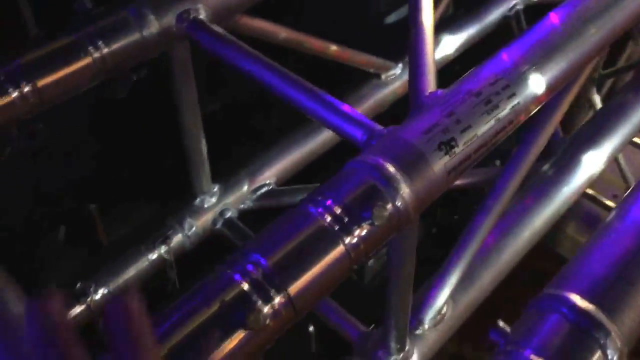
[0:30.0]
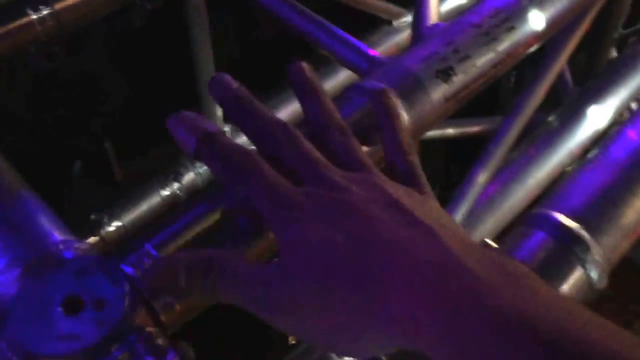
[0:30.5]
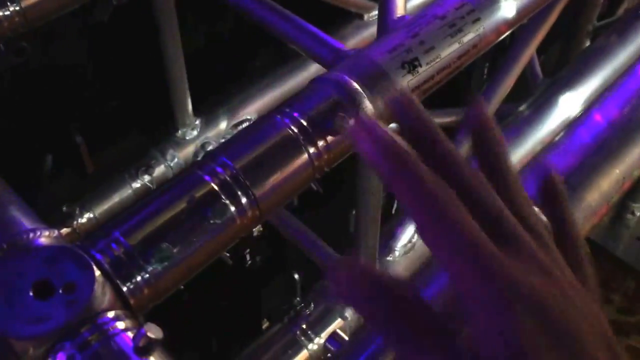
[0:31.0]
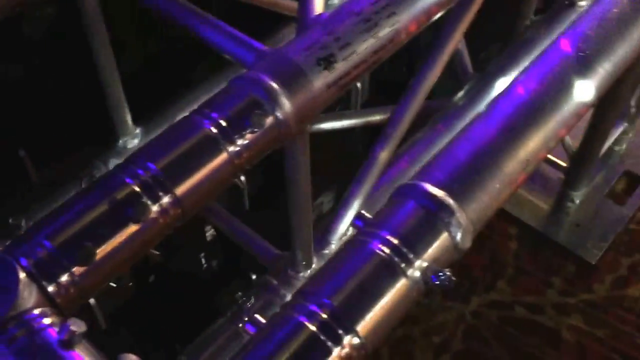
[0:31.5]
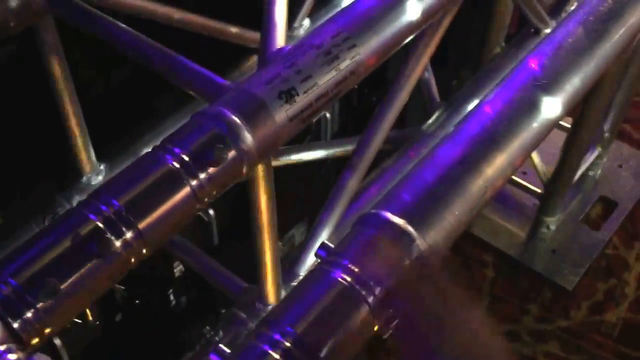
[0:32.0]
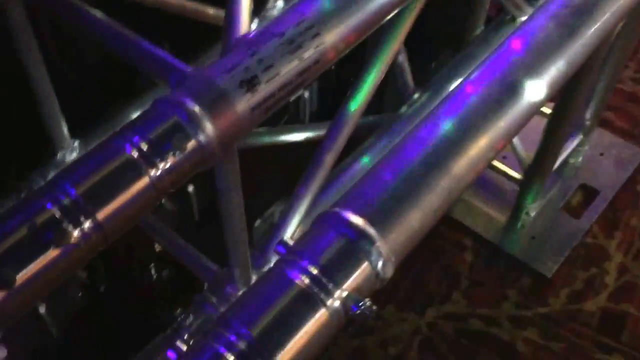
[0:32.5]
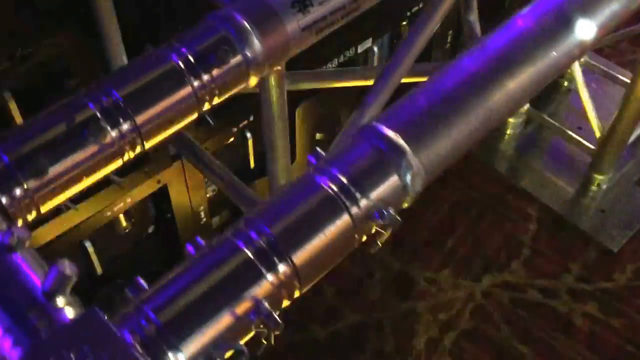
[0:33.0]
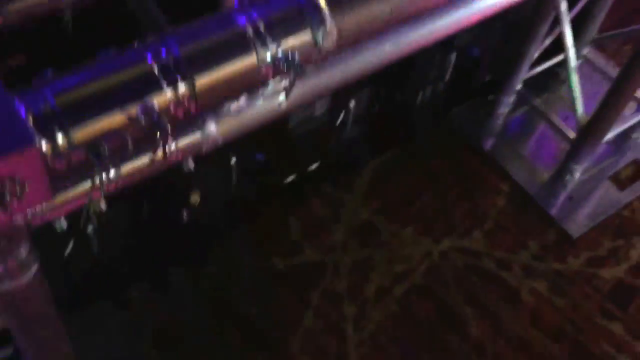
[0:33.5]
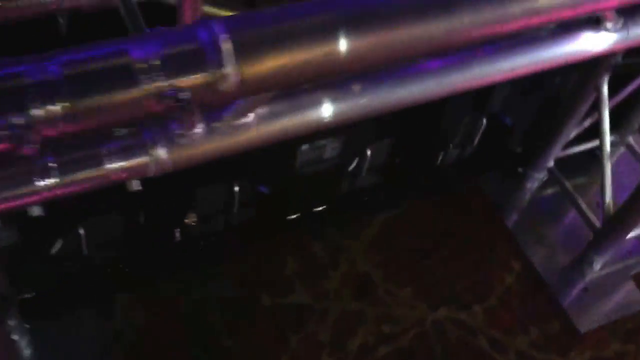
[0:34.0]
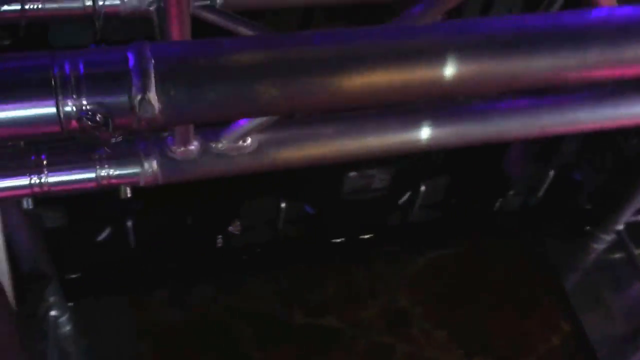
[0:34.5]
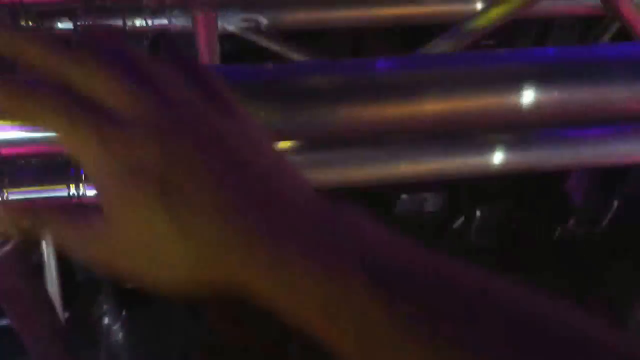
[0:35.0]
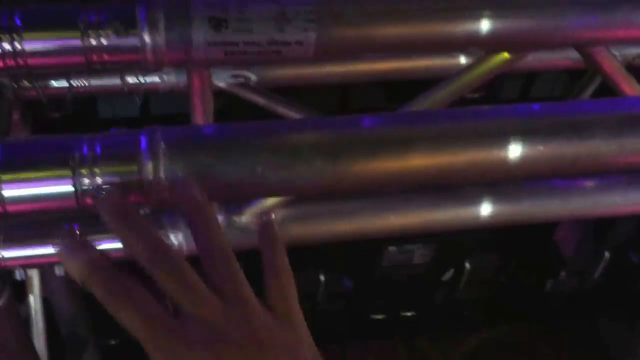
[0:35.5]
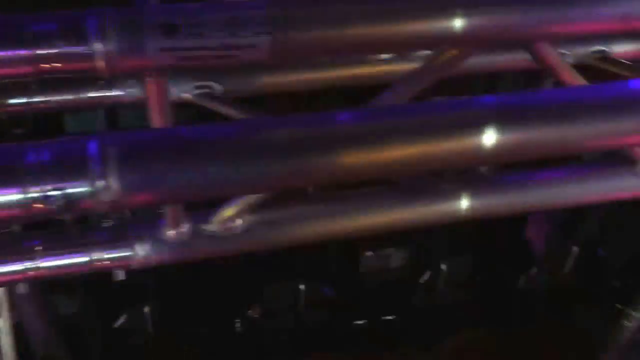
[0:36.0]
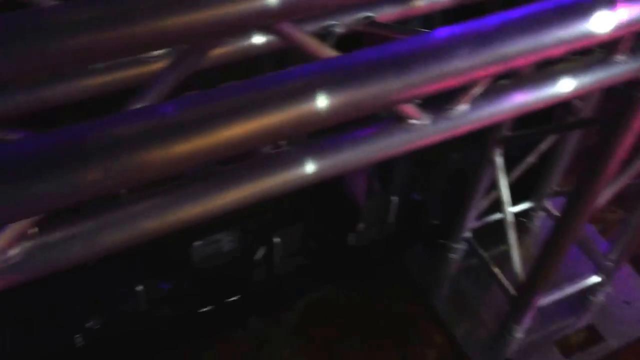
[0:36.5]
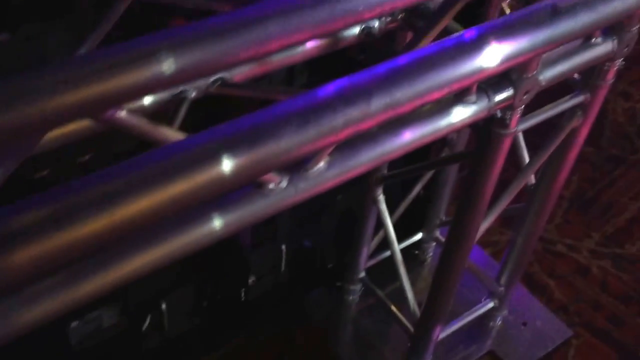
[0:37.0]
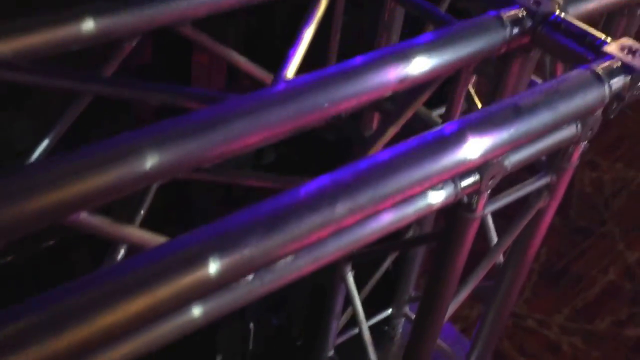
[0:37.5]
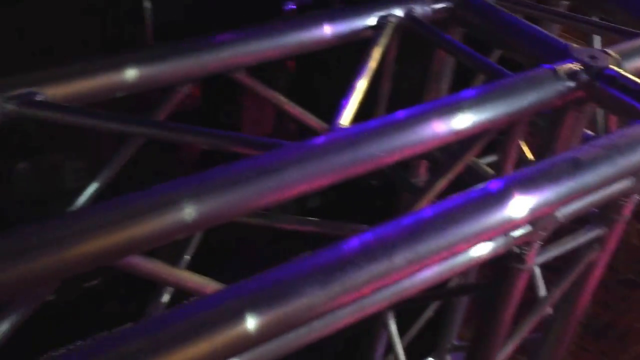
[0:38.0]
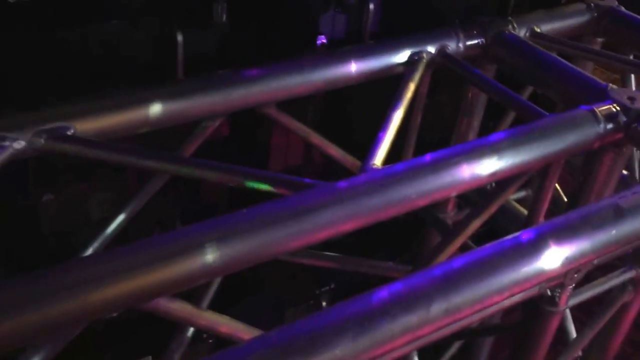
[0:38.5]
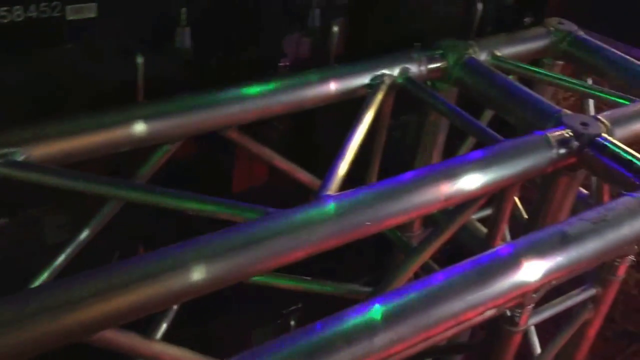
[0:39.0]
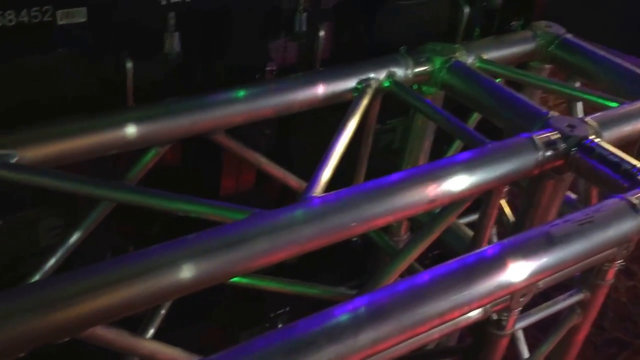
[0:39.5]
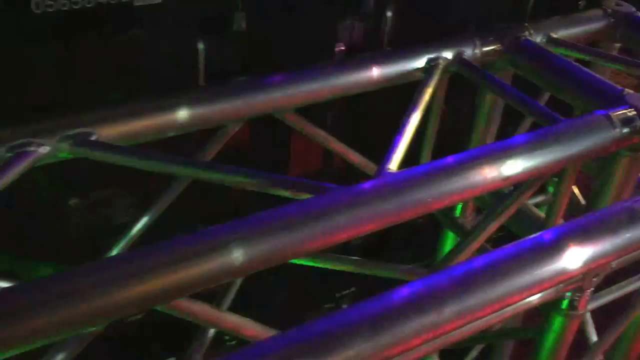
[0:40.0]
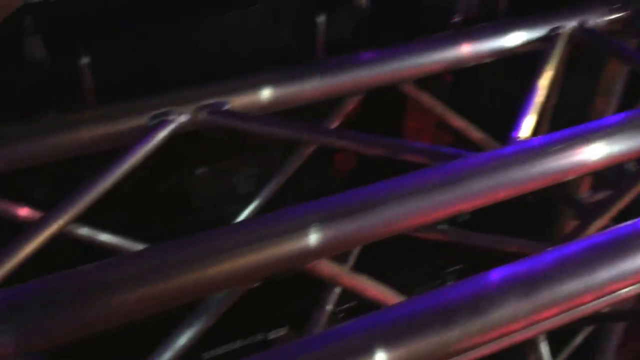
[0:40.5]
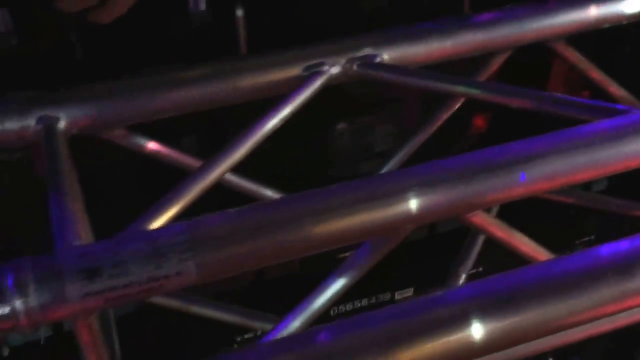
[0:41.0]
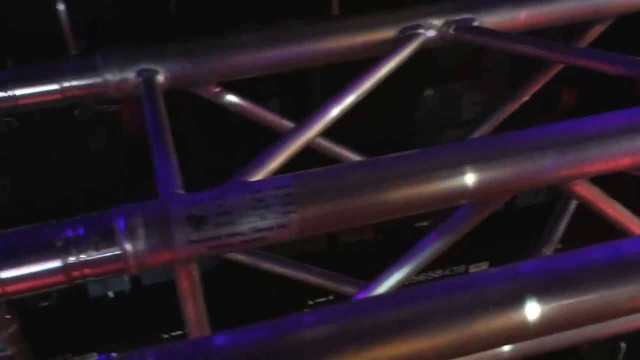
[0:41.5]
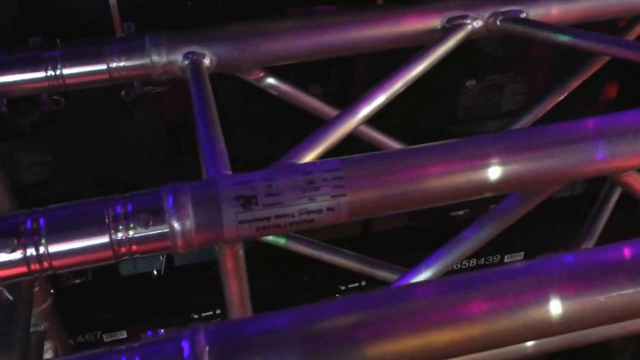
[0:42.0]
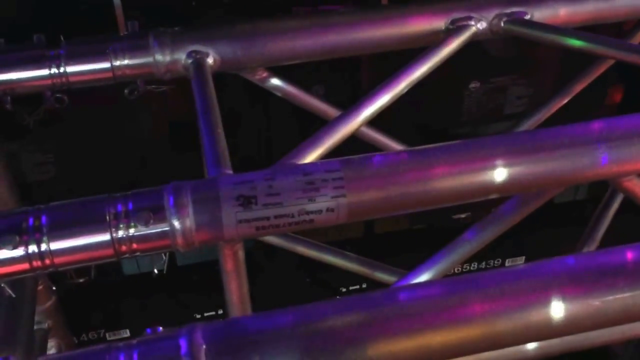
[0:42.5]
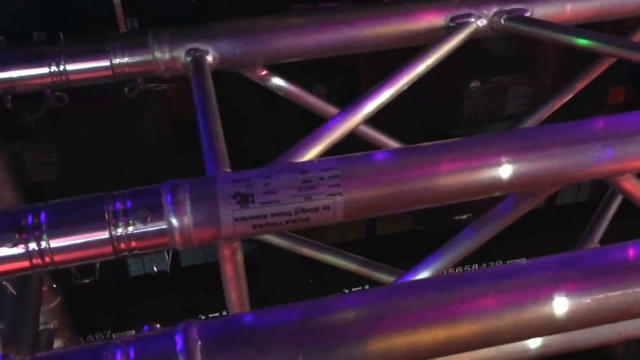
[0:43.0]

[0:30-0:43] The shot starts as a close-up of some sort of metal frame, with green and purple strobe lights flashing on it. The individuals are not seen; only a hand appears, seemingly pointing out various parts of the frame. The frame is possibly the type used on concert stages to hold the lights, perhaps a truss for lighting, like those also seen on catwalks. The camera pans back and forth across the metal frame while the hand points out different items, and then the video ends.